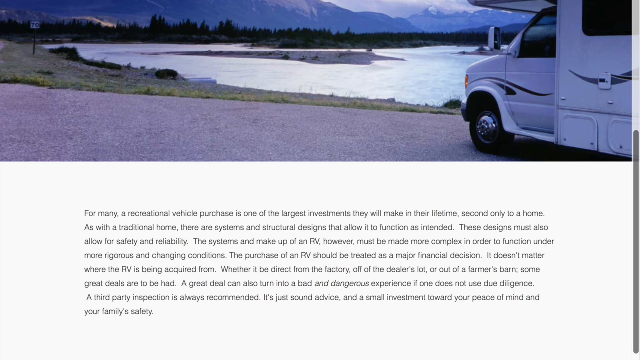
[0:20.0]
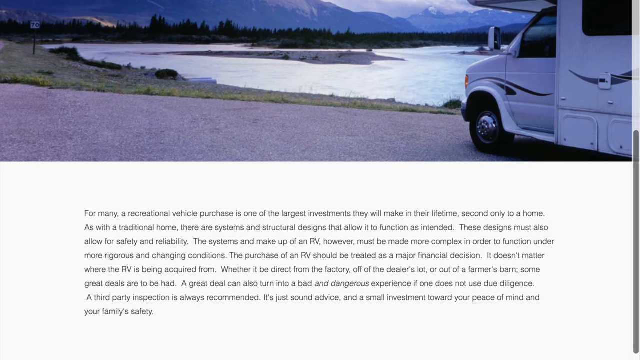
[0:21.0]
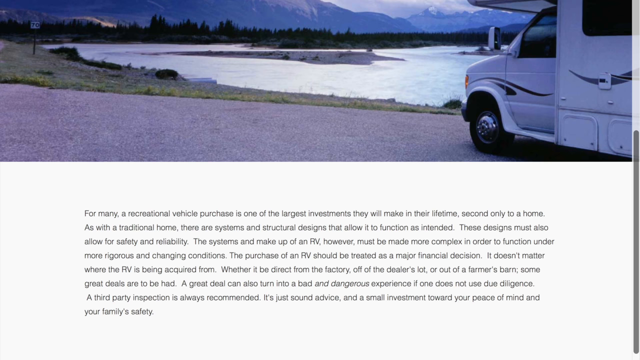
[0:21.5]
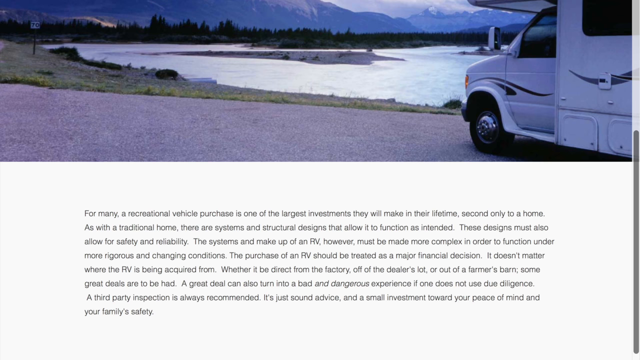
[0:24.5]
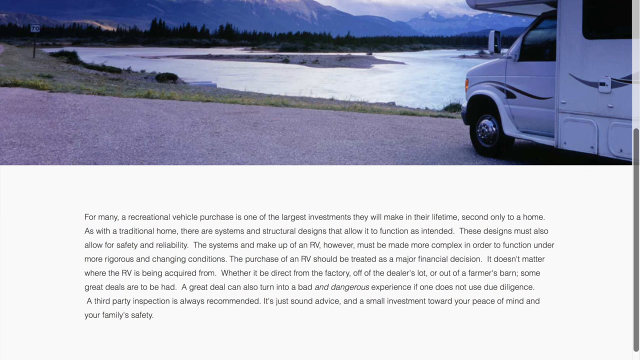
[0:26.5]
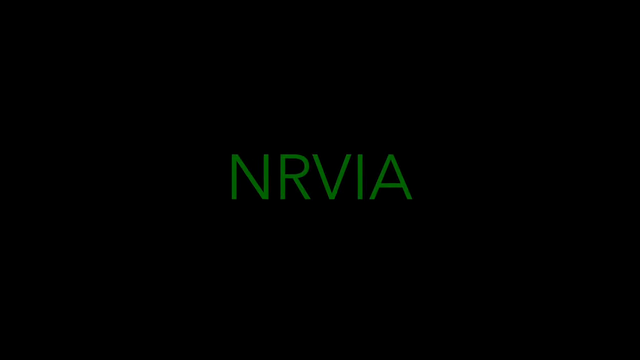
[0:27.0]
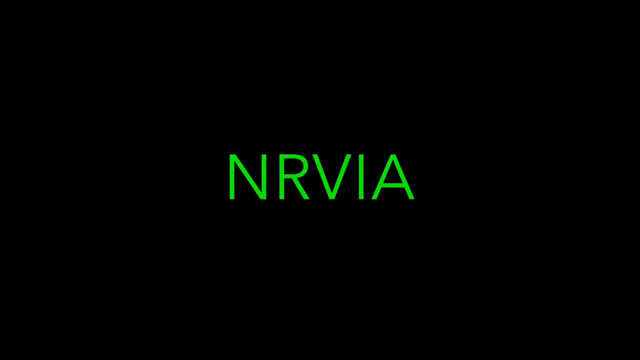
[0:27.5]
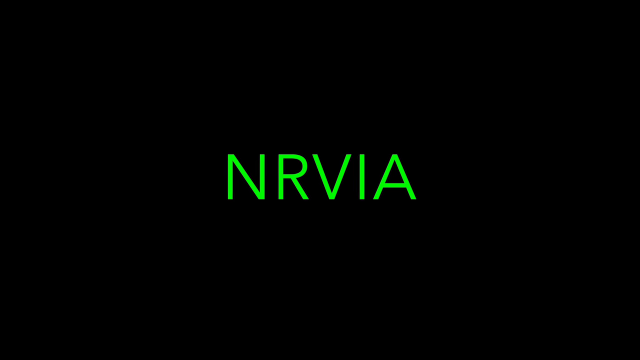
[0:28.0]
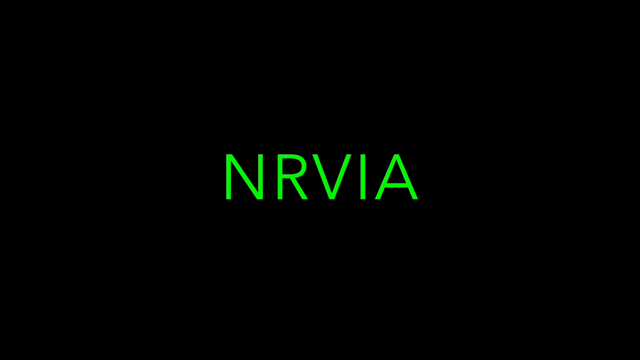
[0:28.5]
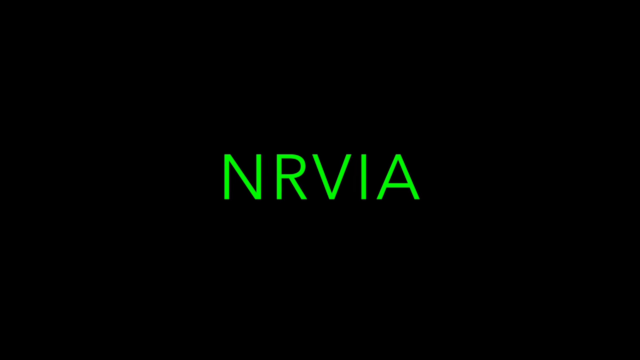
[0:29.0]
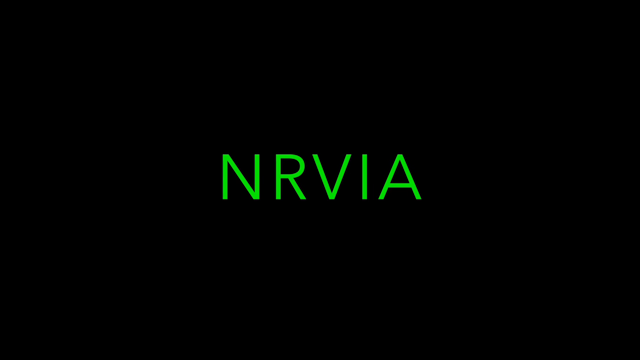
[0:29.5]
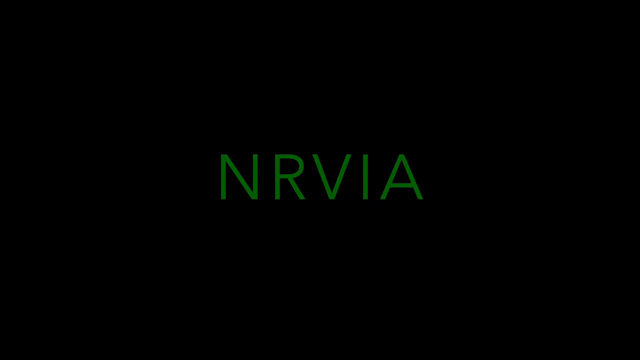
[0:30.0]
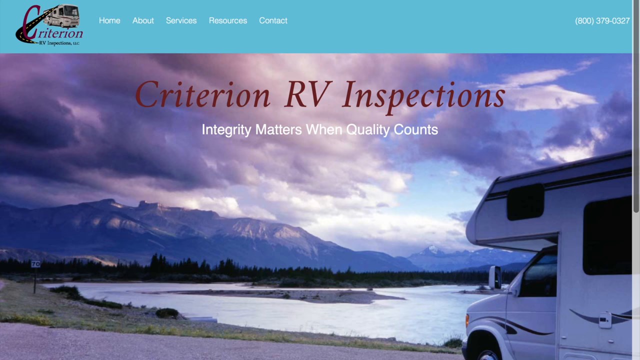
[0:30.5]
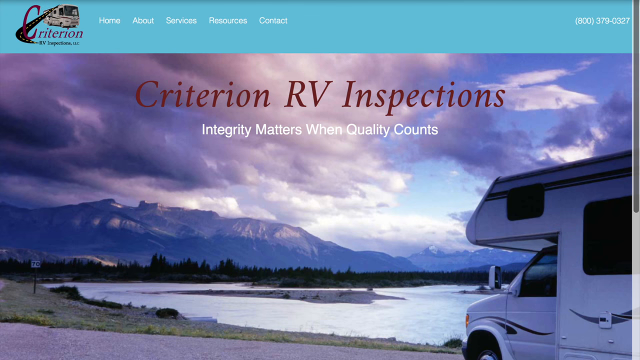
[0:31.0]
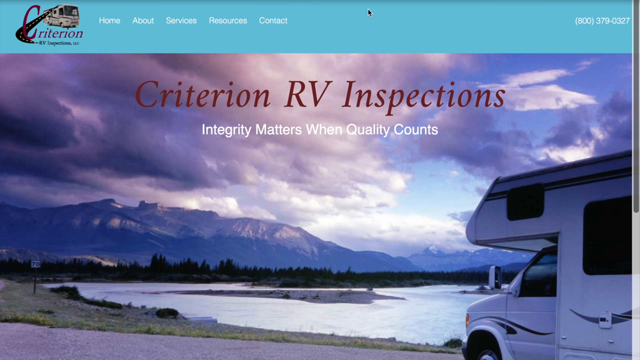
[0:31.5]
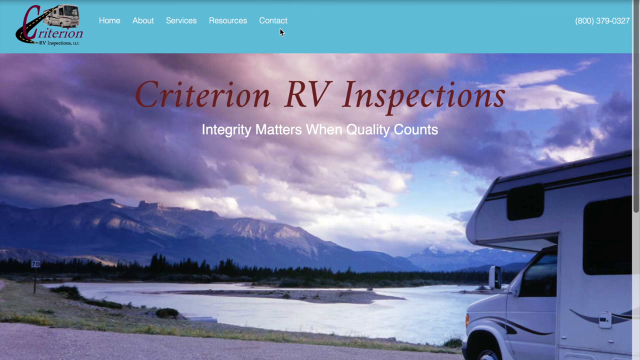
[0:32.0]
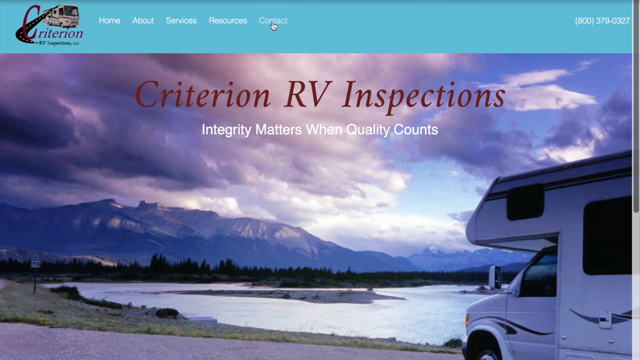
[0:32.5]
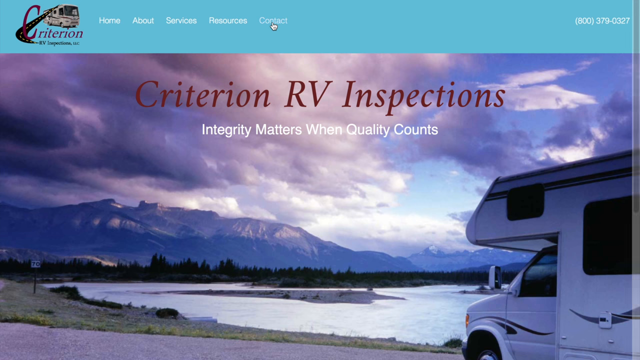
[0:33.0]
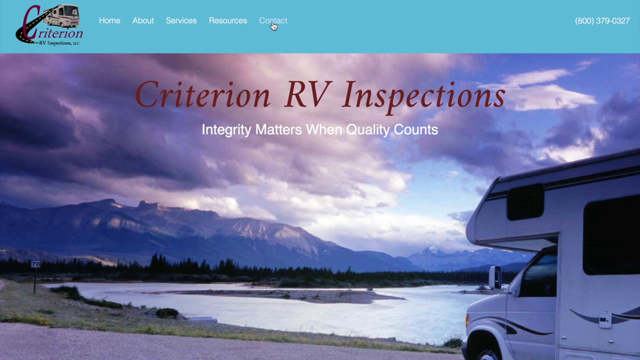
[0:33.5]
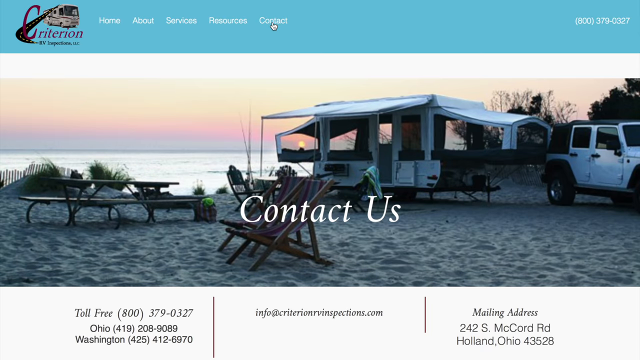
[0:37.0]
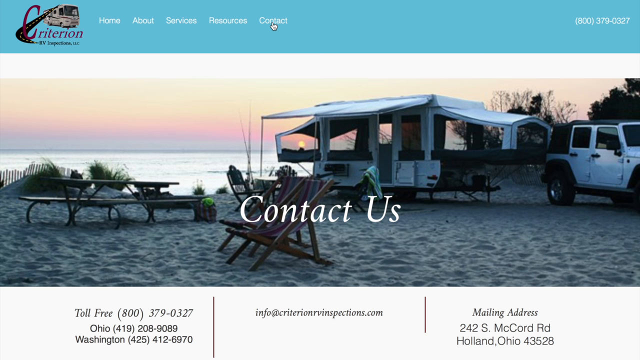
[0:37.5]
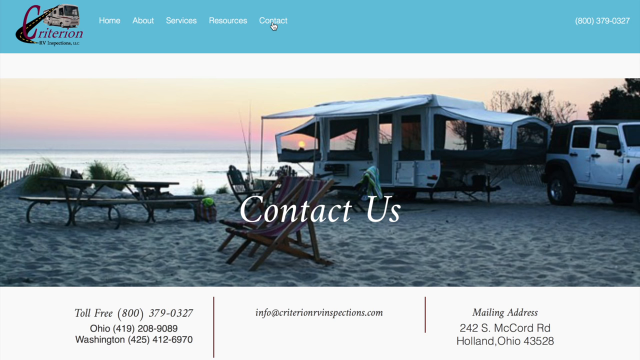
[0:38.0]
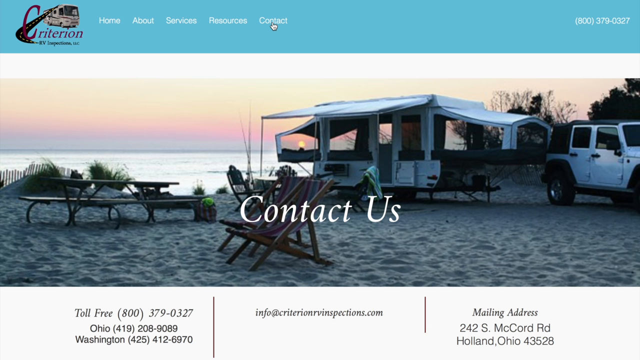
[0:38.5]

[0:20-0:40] More of the same article page is shown, with only the first introductory paragraph of the article visible. At the top is a big picture of an RV on the right, driving off to the left, with a big horizon, a lot of trees in the background and some water in the middle, a lake-type setting. The RV is white with black stripes curving around it. Next, really big green text reading "NRVIA" appears, zooms in and fades out. Then a big light blue banner appears at the top, and the Contact navigation button is clicked, leading to the Contact Us page.